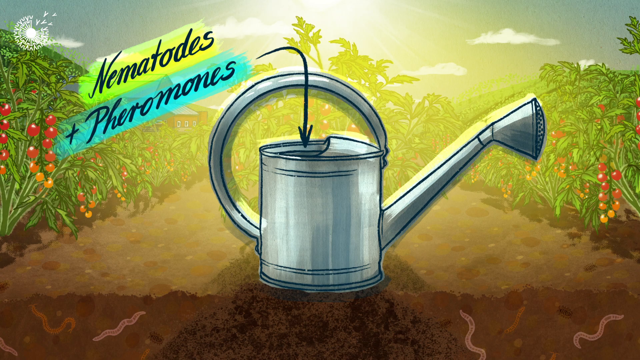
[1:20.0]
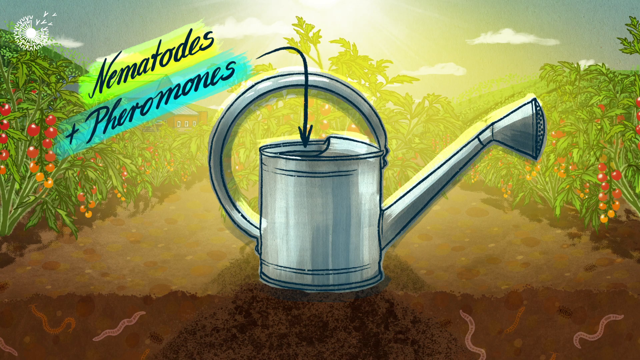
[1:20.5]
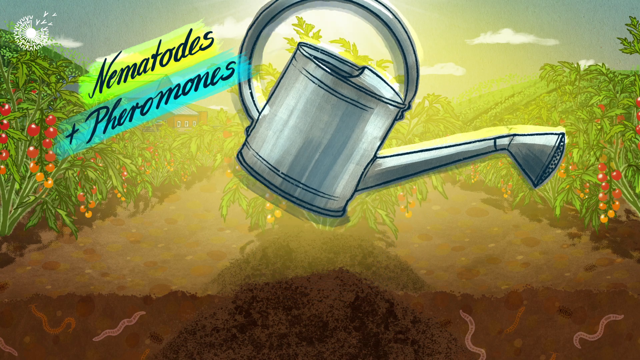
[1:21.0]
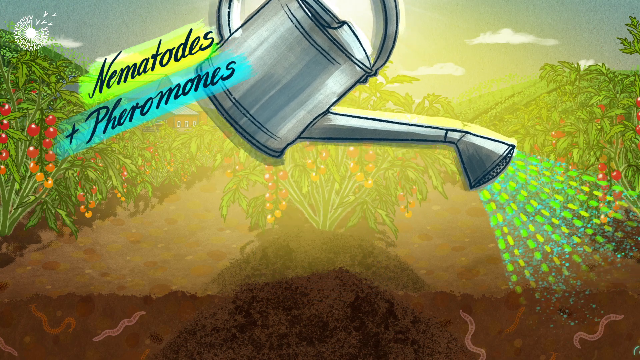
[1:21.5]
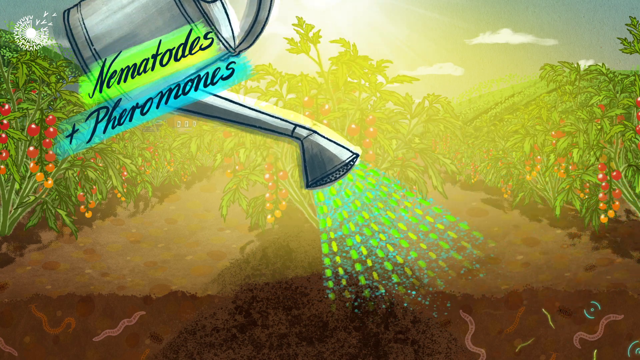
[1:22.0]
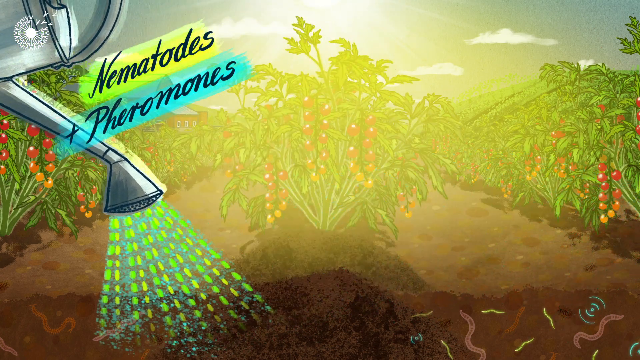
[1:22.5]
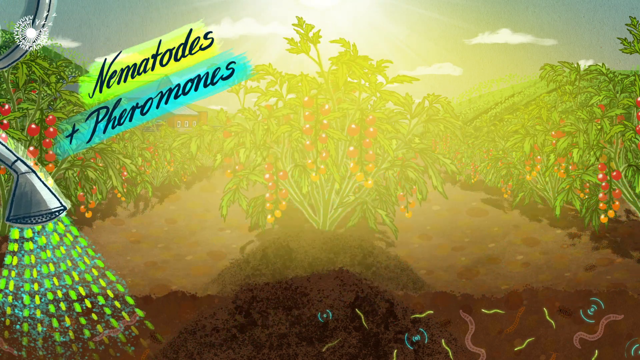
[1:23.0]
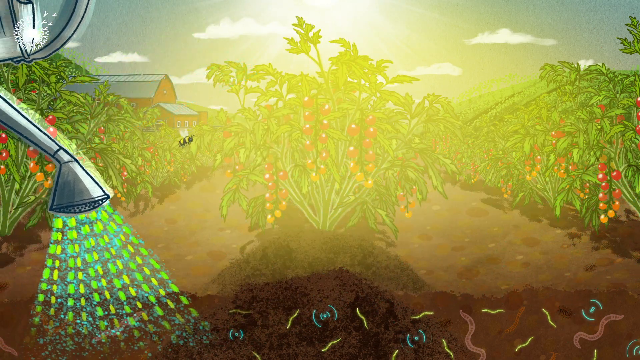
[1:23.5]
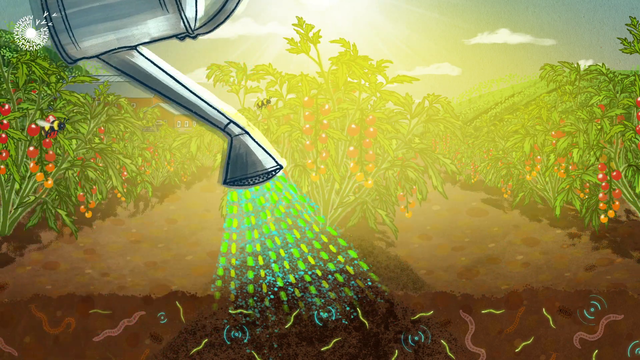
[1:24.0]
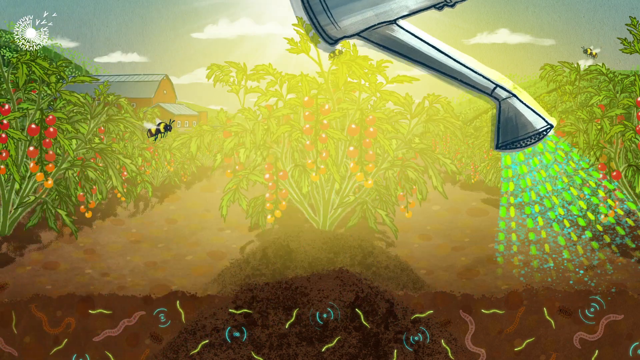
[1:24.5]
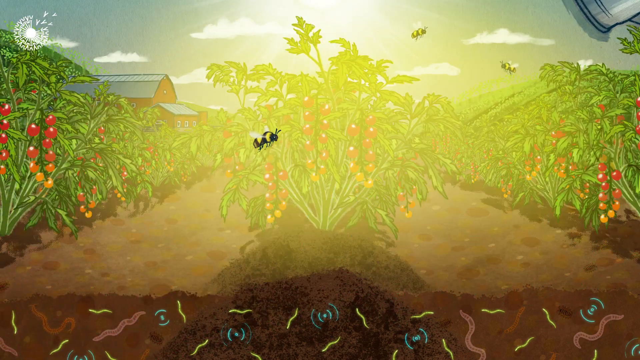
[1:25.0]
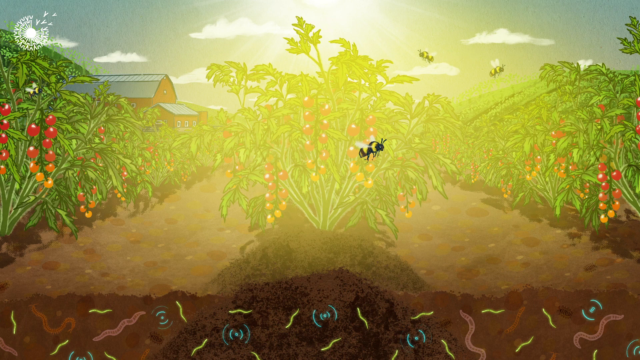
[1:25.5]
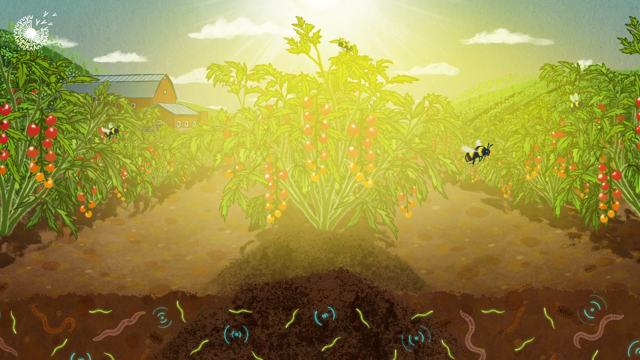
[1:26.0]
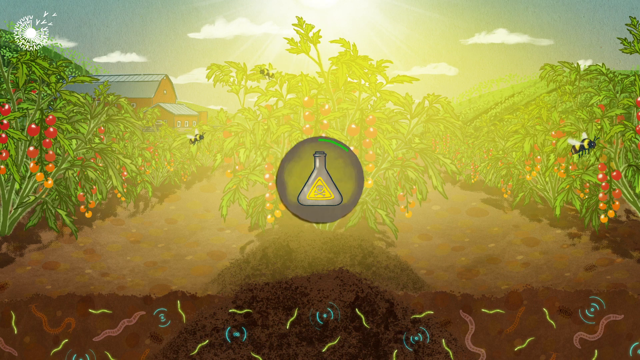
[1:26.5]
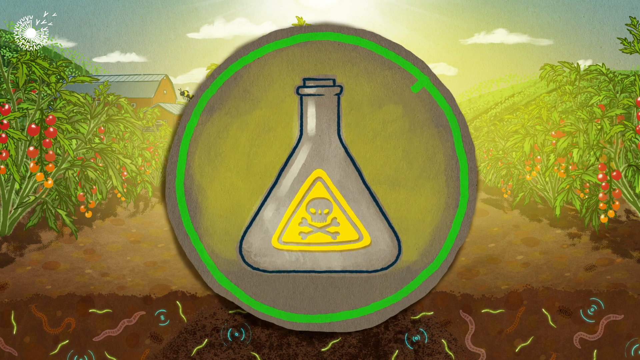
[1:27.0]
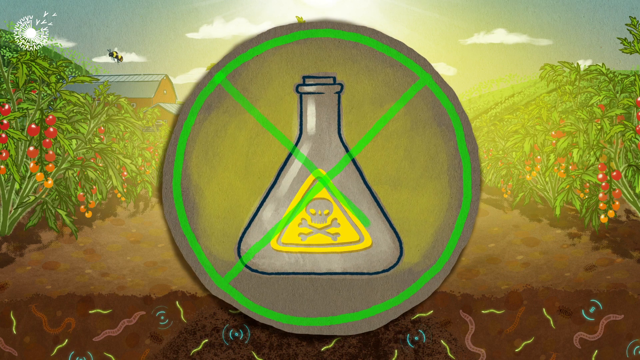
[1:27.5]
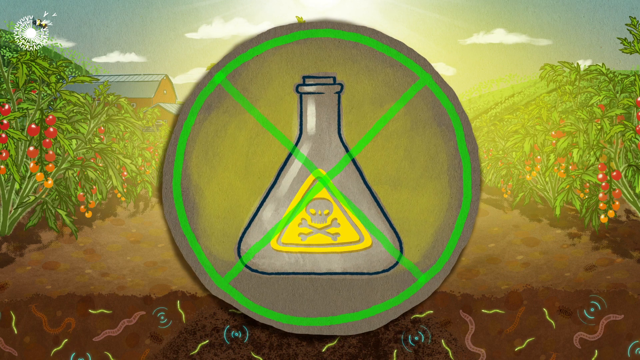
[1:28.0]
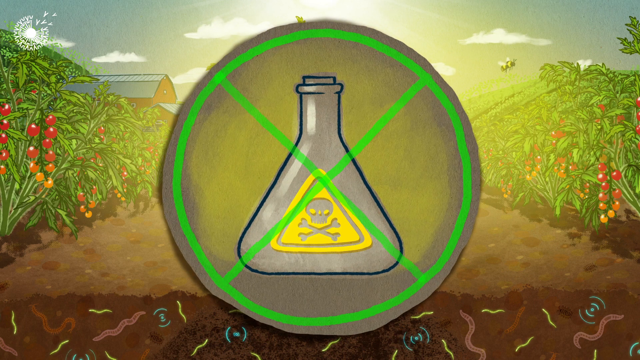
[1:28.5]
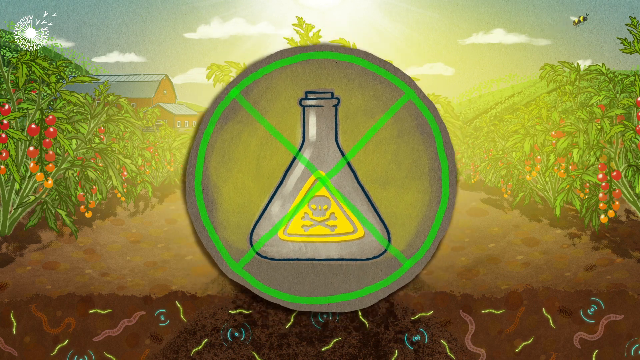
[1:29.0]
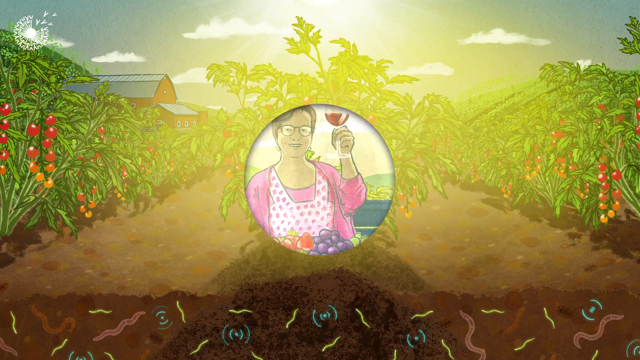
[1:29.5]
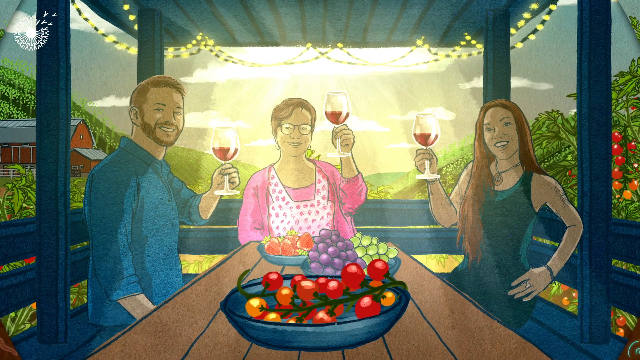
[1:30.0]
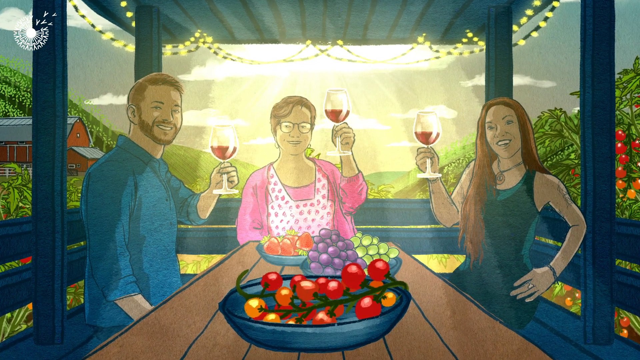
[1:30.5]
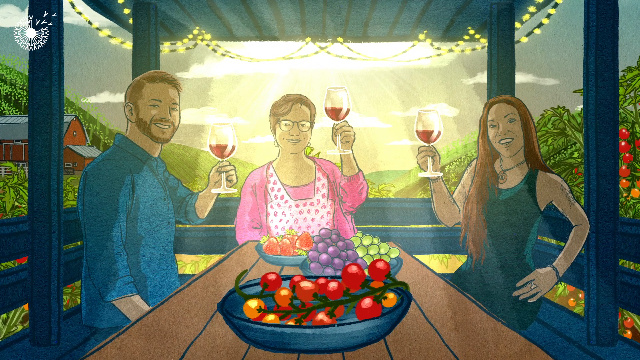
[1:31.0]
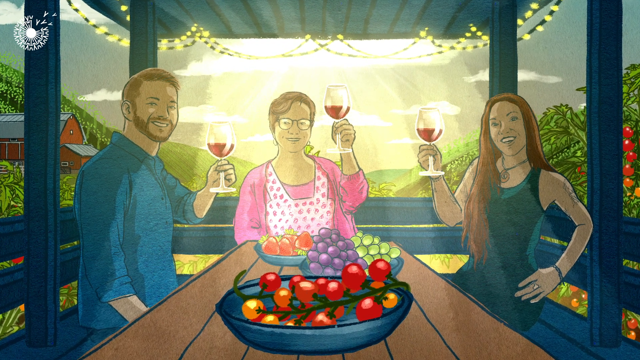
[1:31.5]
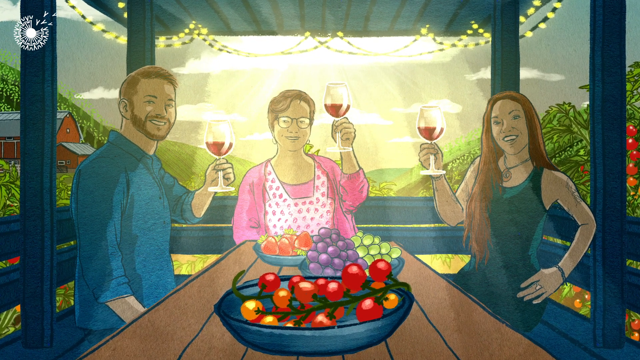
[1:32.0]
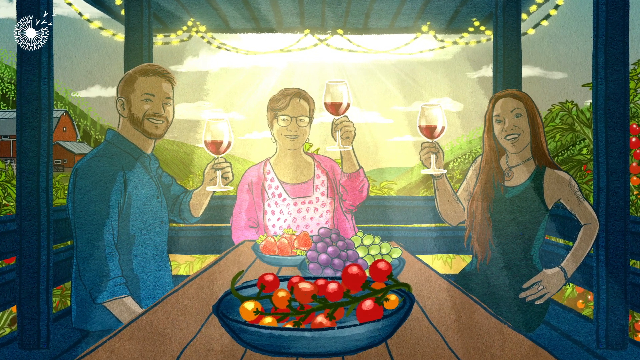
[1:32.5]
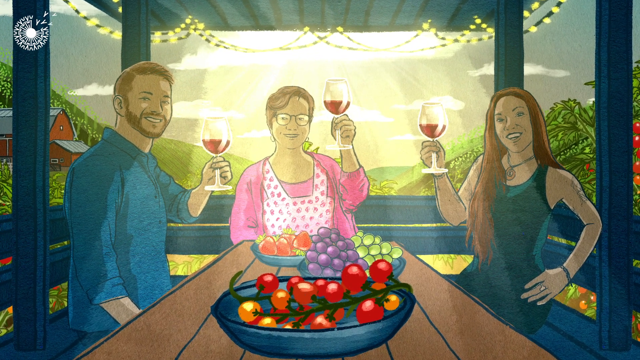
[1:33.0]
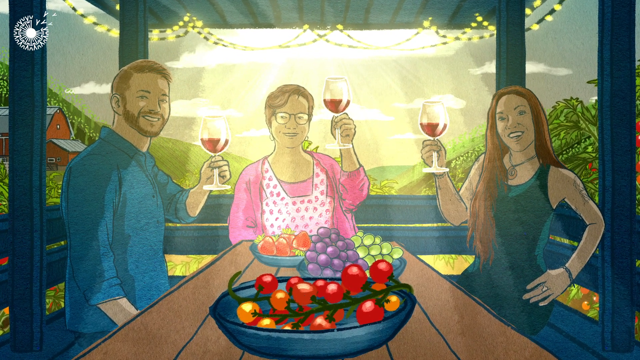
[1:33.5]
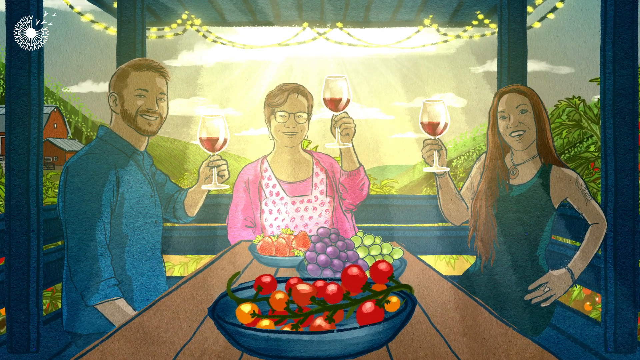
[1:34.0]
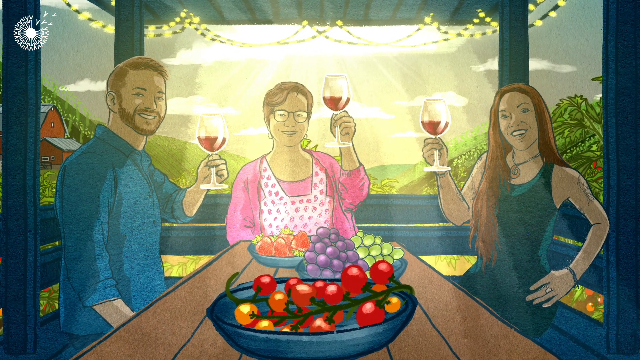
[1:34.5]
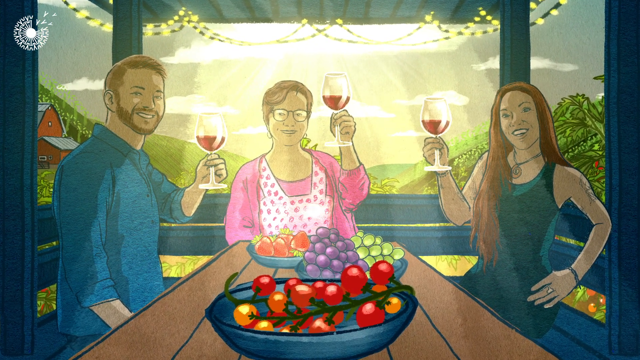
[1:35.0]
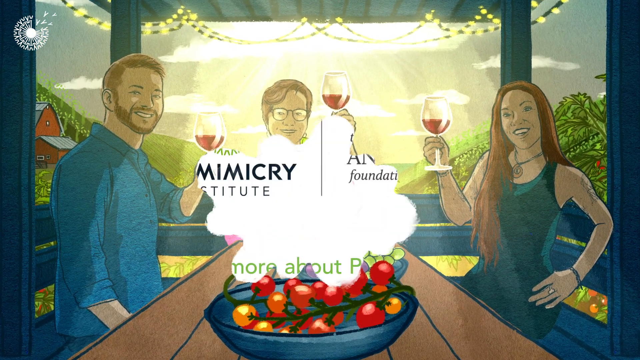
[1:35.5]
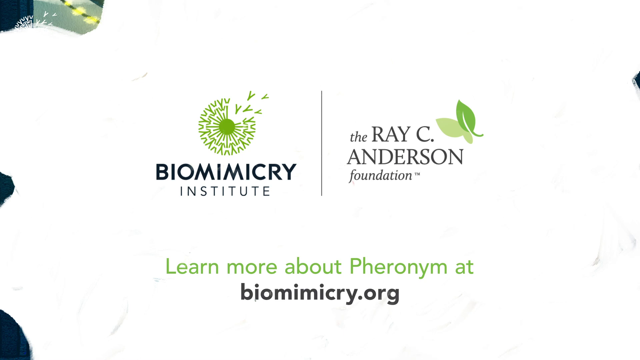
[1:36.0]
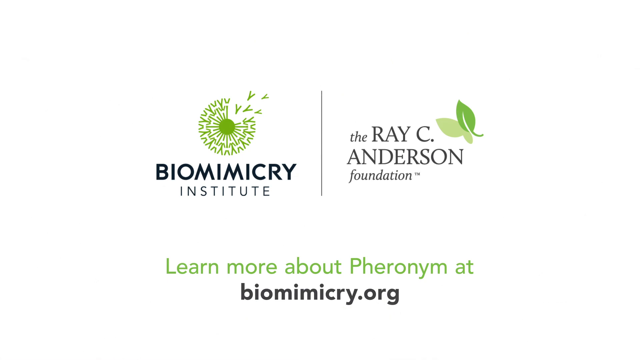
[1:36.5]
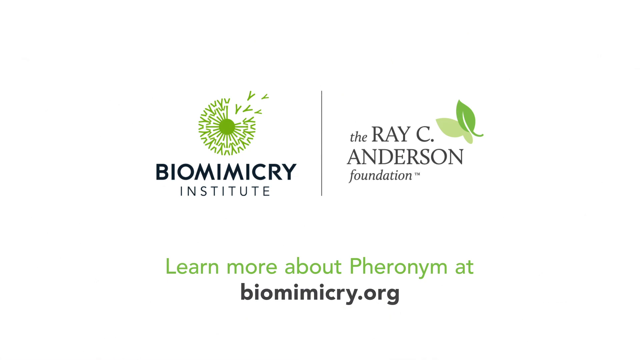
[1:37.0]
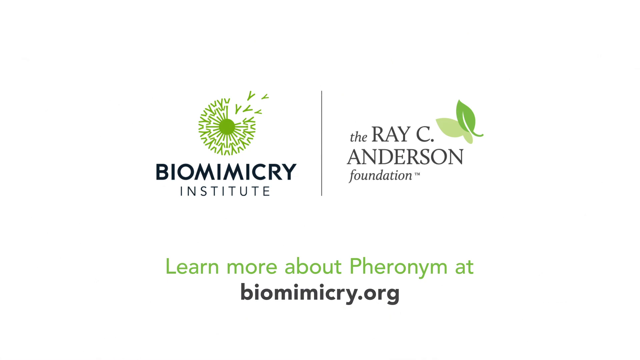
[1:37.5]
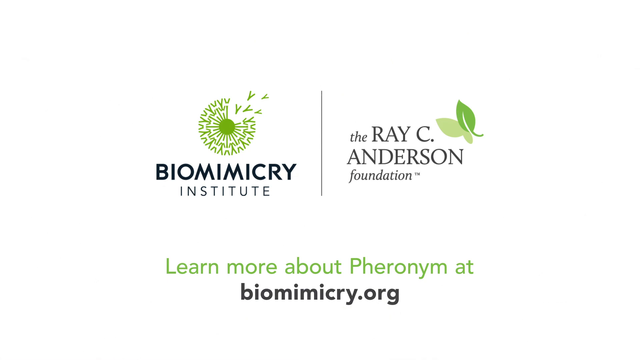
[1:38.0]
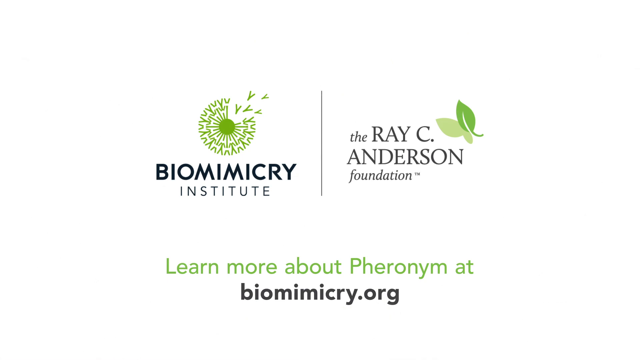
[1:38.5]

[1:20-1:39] An animated watering can faces toward the right. In the background there are what looked like cherry tomato vines on green plants. Text at the top left reads "nematodes plus pheromones," and an arrow points from the text down into an opening at the top of the watering can. The watering can appears to spray down onto the soil, spraying a lot of green, yellow and pheromones, with a green, blue and yellow highlight around it. The soil has what look like signals, with blue signals and little yellow worms. Suddenly a vial with a circle around it appears in the middle of the screen; the vial seems to have a yellow skull in its middle, and a green X goes around it. The circle goes down, minimizes, then spreads across the screen, transitioning to an animation of three people sitting around a table: a man on the left, a woman in the middle and a woman on the right, all holding up red wine glasses and toasting. They all appear to be looking at the viewer. In the background are a blue field and green fields with a board on the left side, a sunset, clouds and a ray of sunshine downward. On the table are grapes, a vine of cherry tomatoes and what look like strawberries. A cloud spreads out from the middle as a transition; the white cloud becomes a white background. The outro screen apparently reads "Biomimicry Institute" on the left and "the Ray C. Anderson Foundation" on the right, with "more about Pharaoh Nim at biomimicry.org" at the bottom.